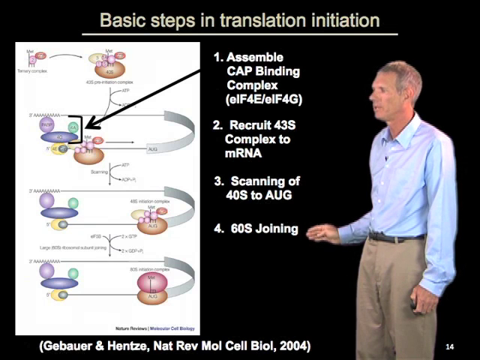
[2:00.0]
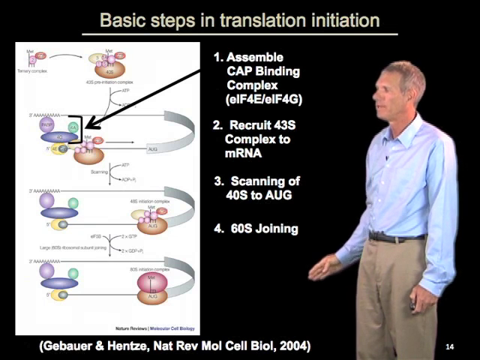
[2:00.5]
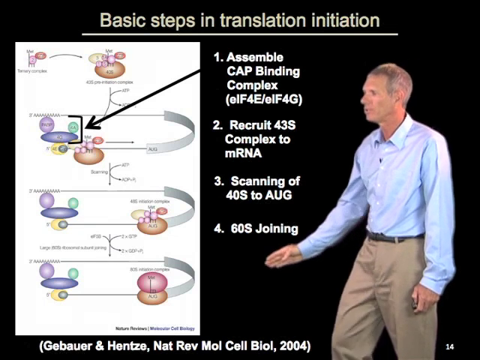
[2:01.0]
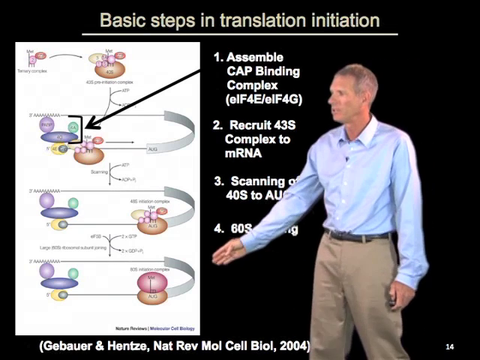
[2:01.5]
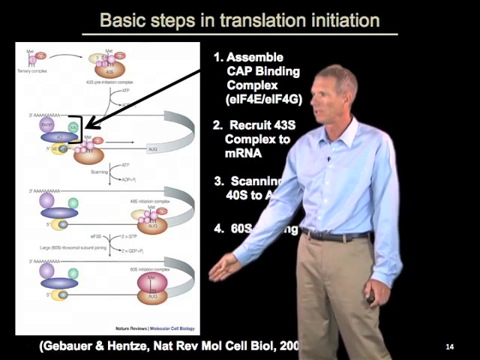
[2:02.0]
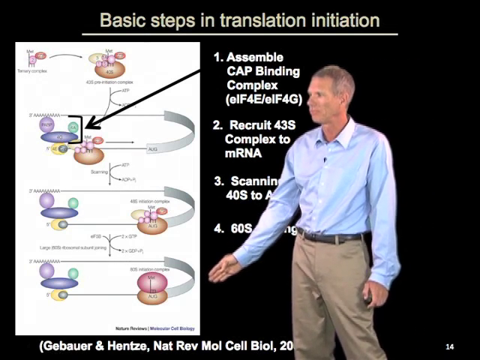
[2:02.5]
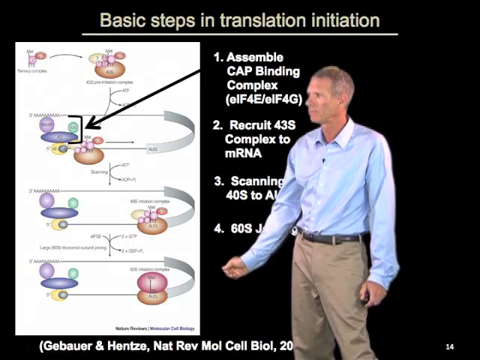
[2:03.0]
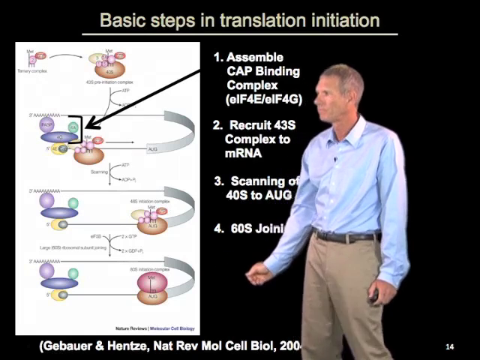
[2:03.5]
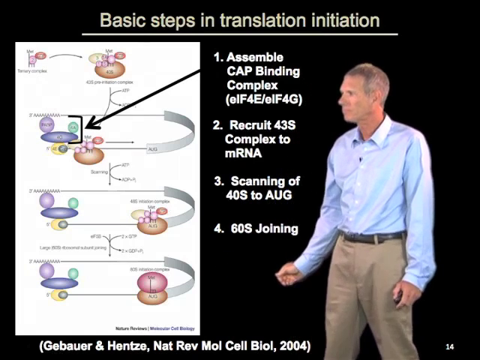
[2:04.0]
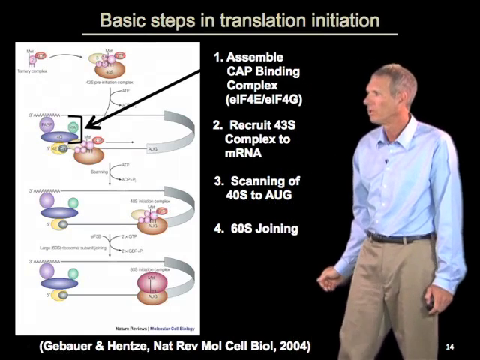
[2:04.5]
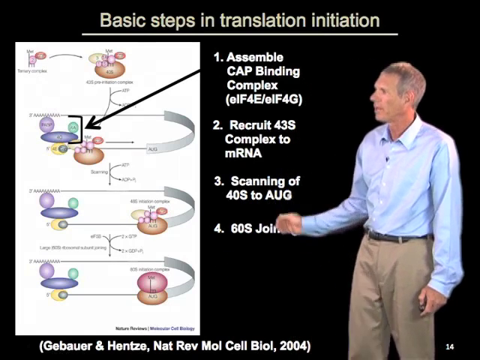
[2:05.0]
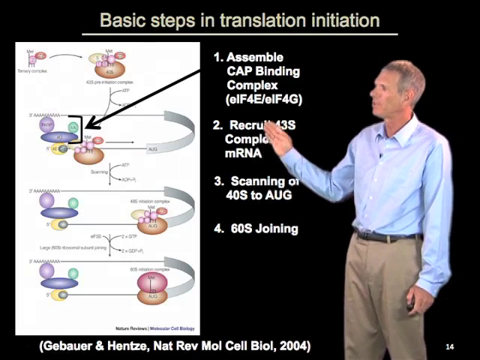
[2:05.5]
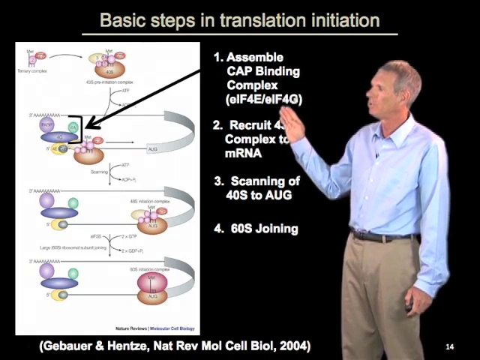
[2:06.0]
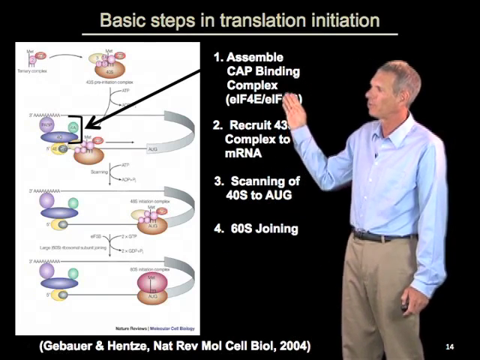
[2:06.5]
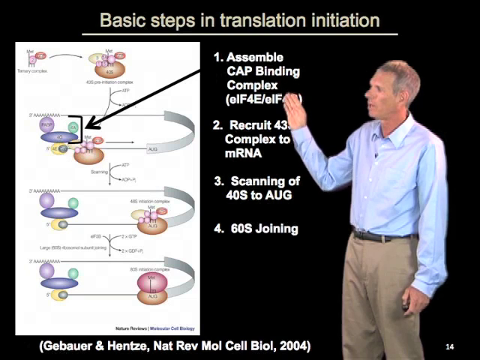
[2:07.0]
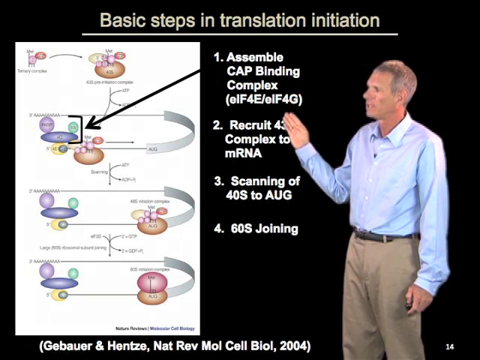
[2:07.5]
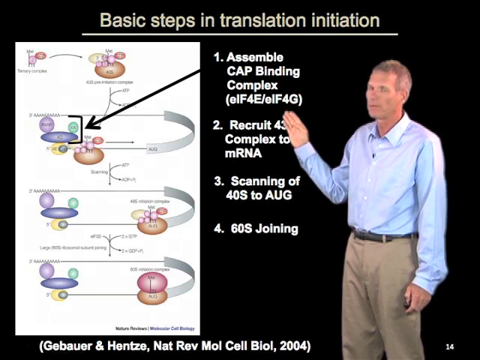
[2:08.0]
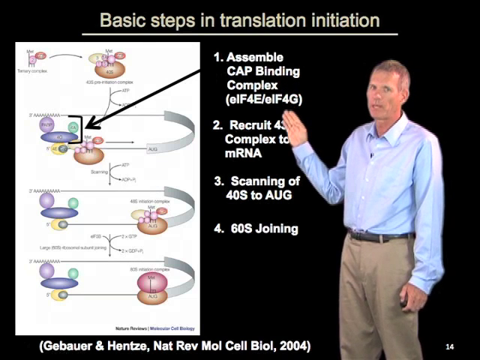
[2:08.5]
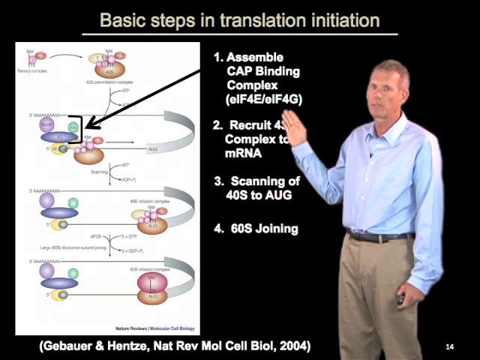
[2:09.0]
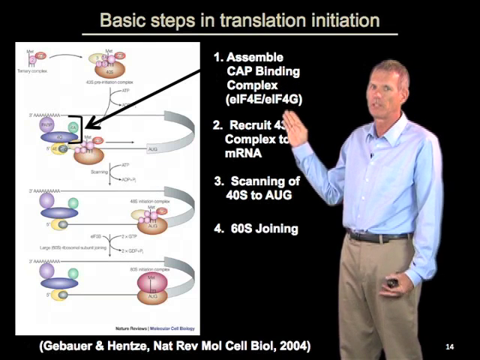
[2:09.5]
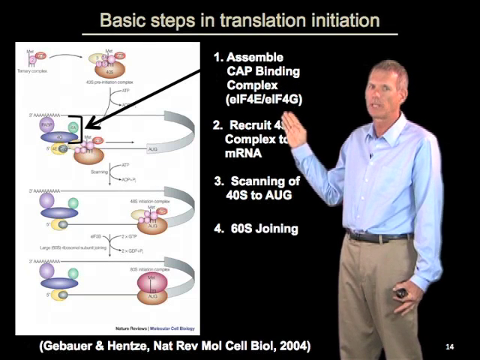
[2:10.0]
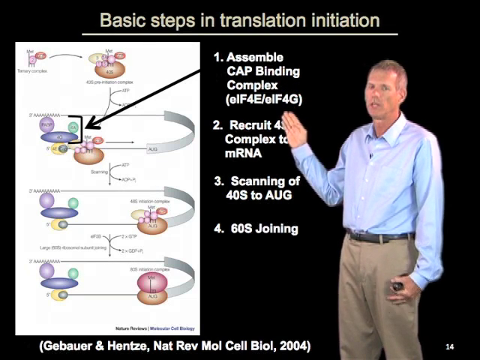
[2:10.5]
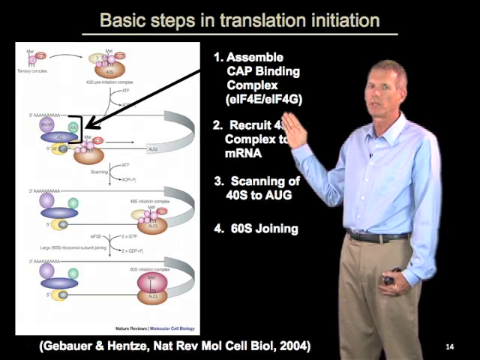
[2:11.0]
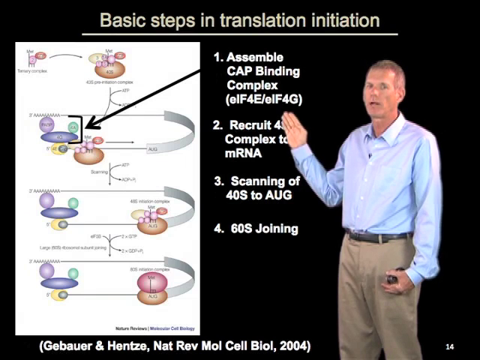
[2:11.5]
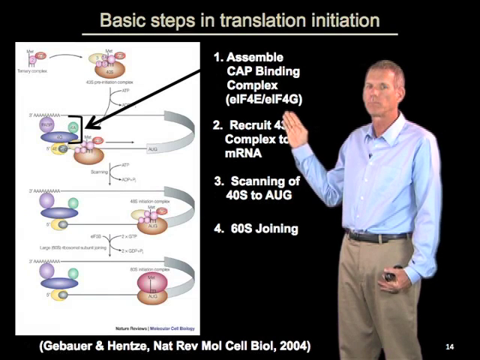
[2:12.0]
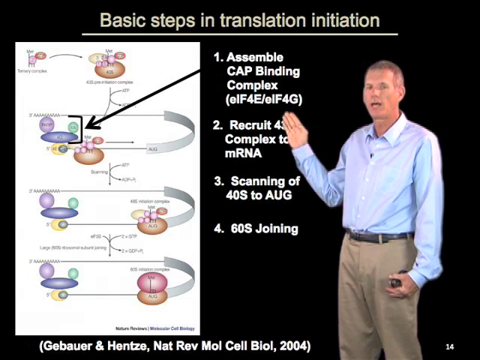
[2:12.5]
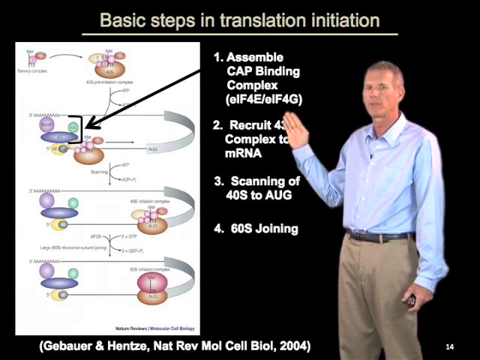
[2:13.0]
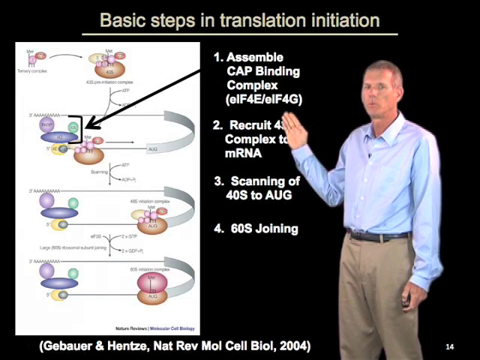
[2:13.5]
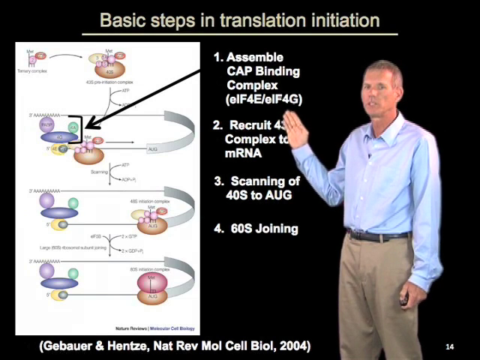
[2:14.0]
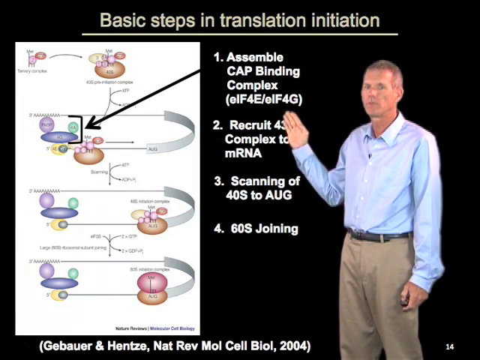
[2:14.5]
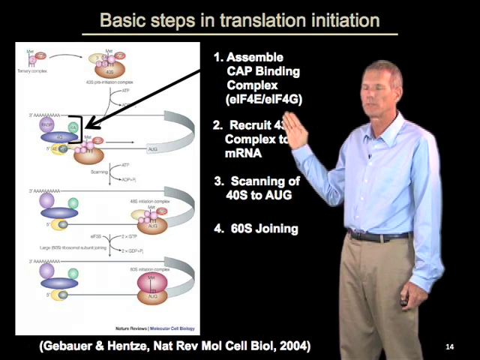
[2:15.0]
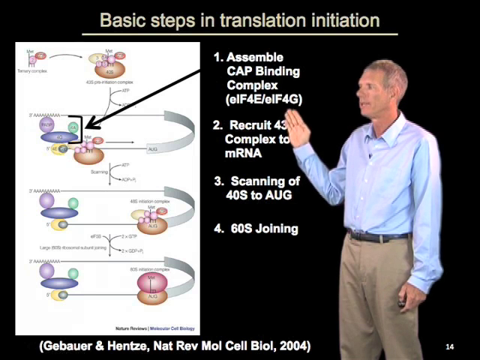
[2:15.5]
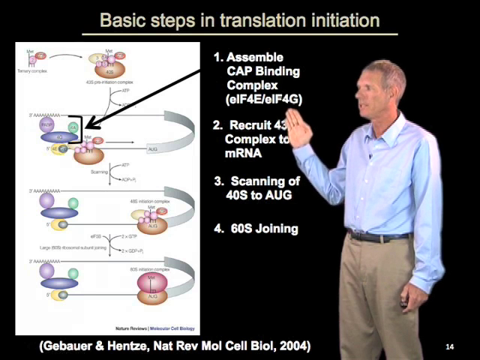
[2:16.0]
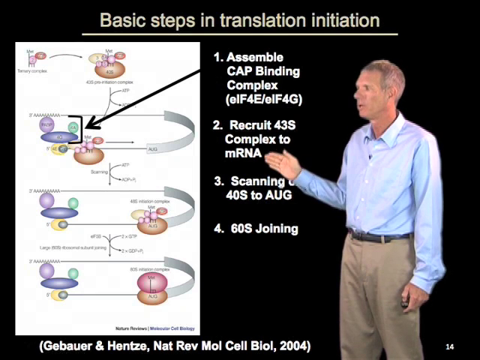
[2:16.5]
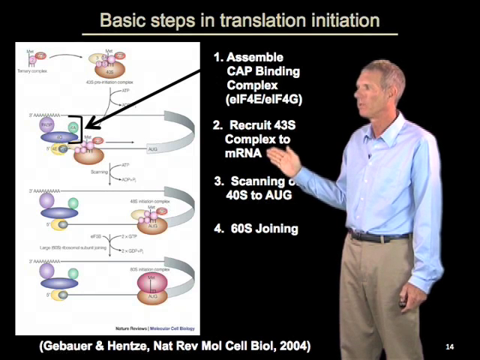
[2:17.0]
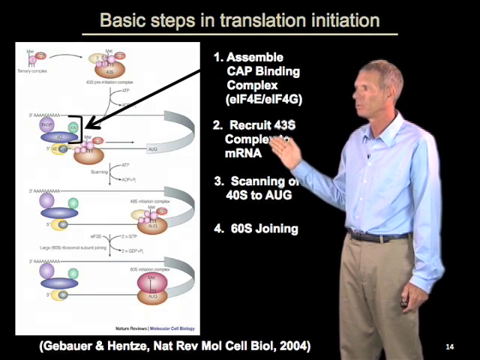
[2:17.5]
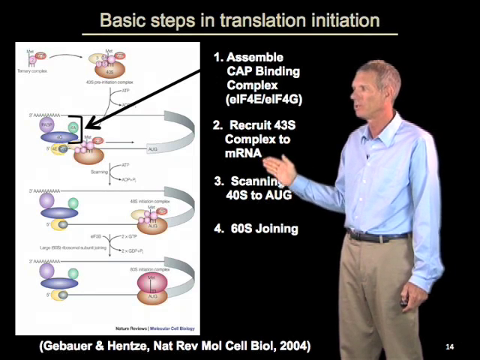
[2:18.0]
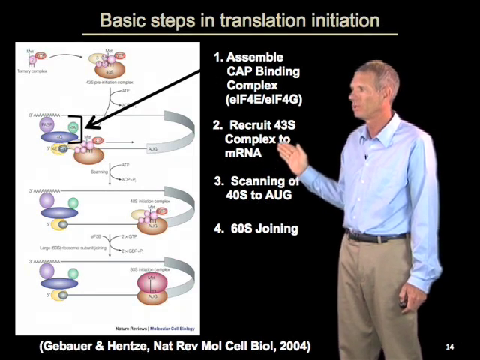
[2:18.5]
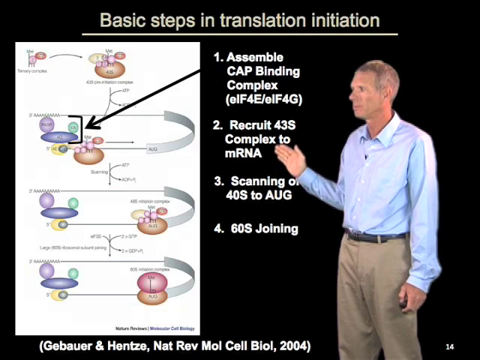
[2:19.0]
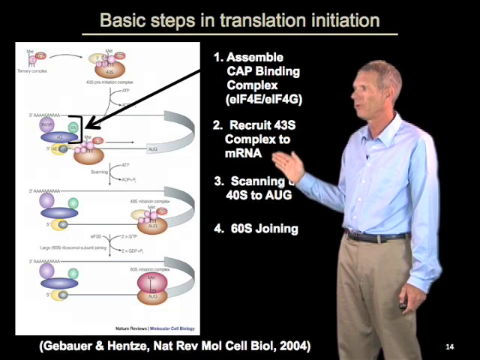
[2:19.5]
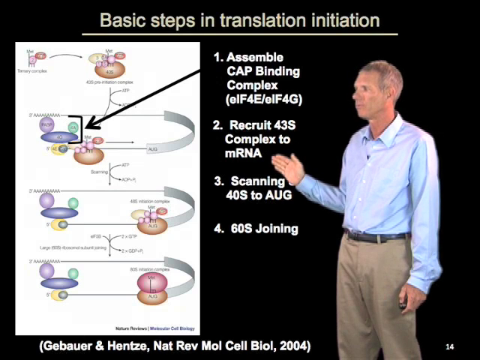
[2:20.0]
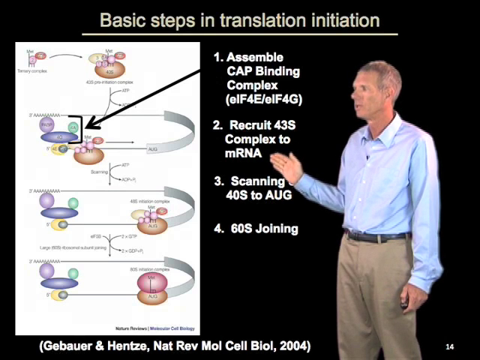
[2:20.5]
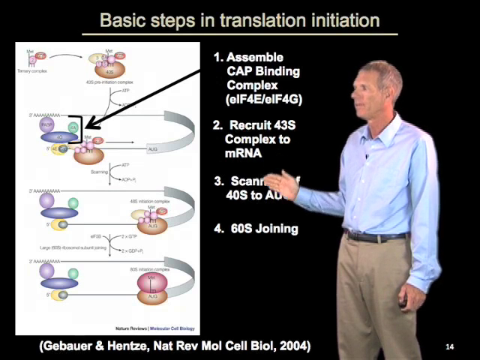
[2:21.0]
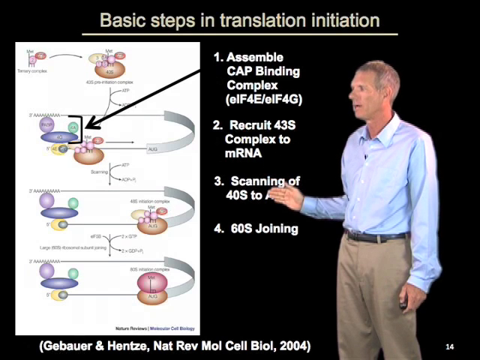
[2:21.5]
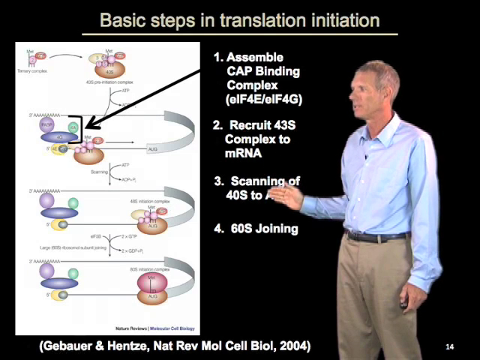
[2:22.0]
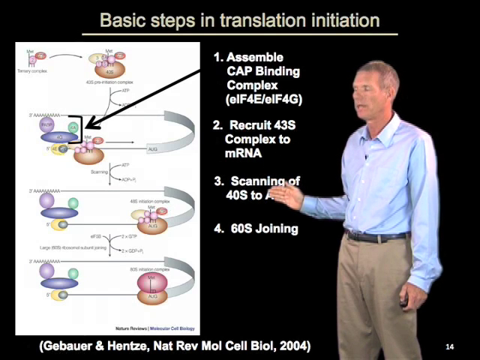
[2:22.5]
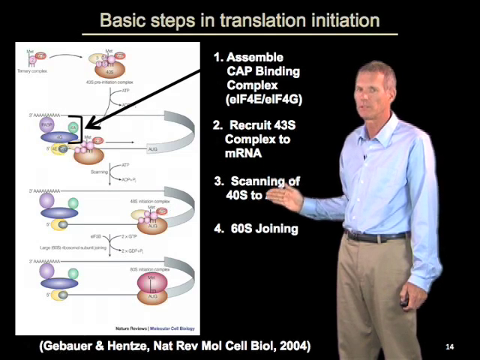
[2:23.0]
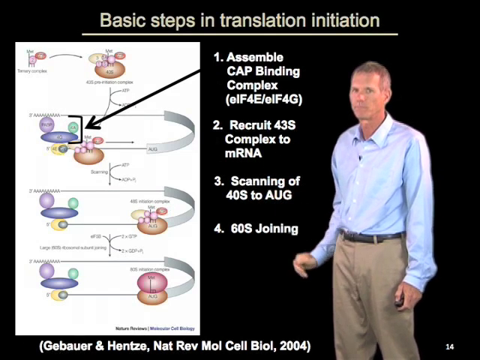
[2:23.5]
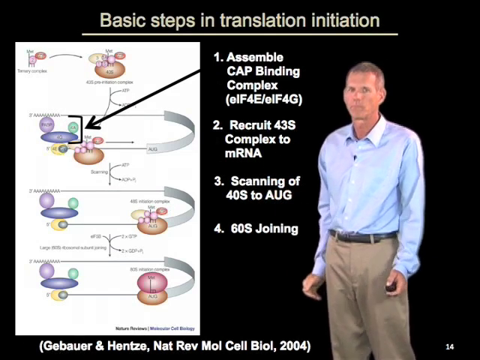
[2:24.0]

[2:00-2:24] The man in khaki pants and a long blue-sleeved shirt, with a clicker in his left hand, points with his right hand at the chart of the basic steps in translation initiation. Step one is "assemble the cap binding complex," with a black arrow pointing to a picture of it. Step two is "recruit 43S complex to mRNA," step three is "scanning 40S to AUG," and step four is "60S joining," each with a picture. The man stands to the right of the words and to the far right of the vertical chart. He points to step four, then up to step one, then looks at step two, moves down to step three, and then looks at the camera and stops.